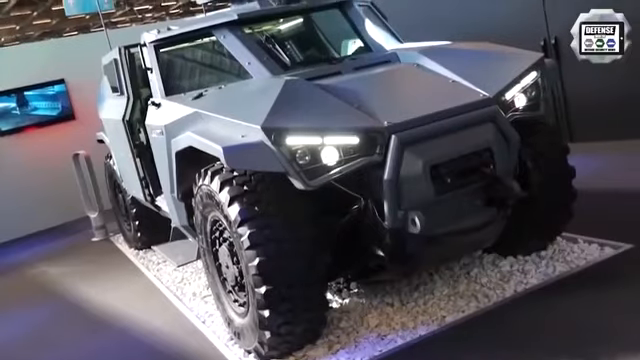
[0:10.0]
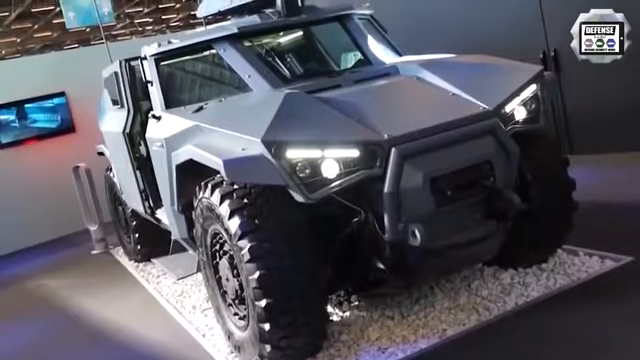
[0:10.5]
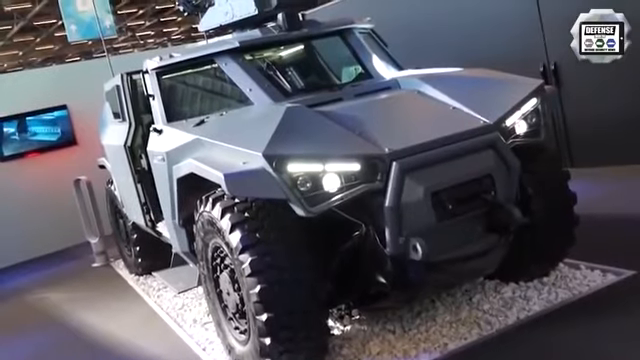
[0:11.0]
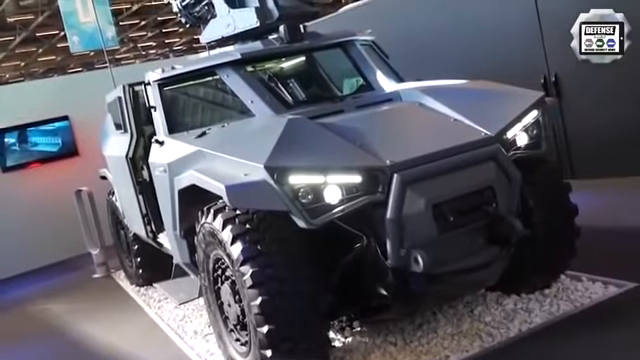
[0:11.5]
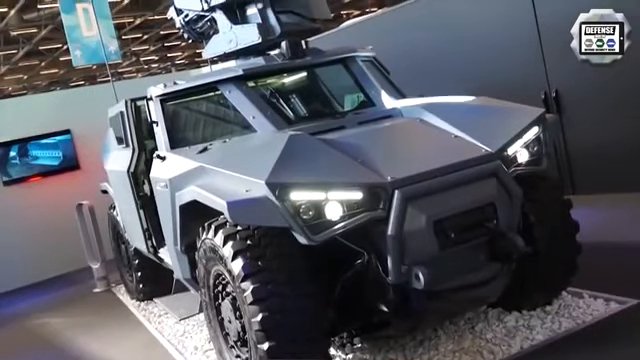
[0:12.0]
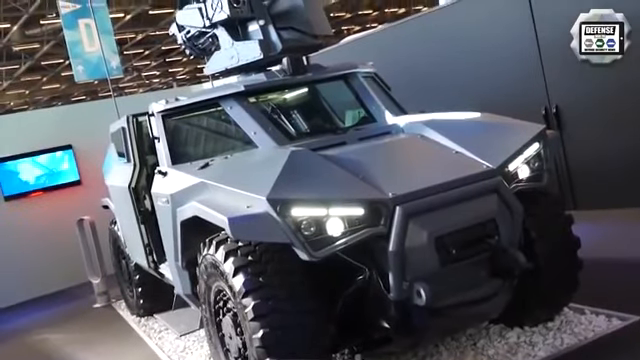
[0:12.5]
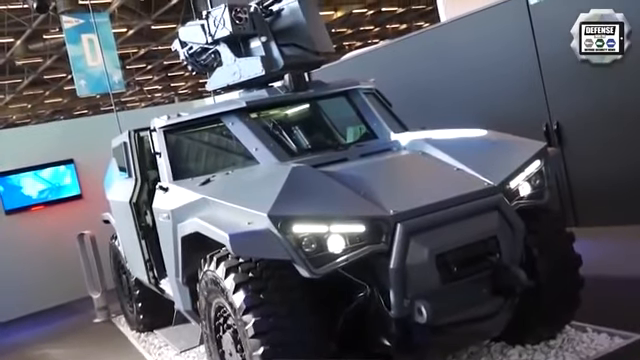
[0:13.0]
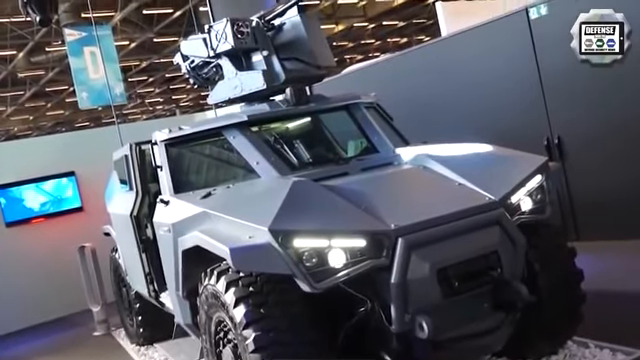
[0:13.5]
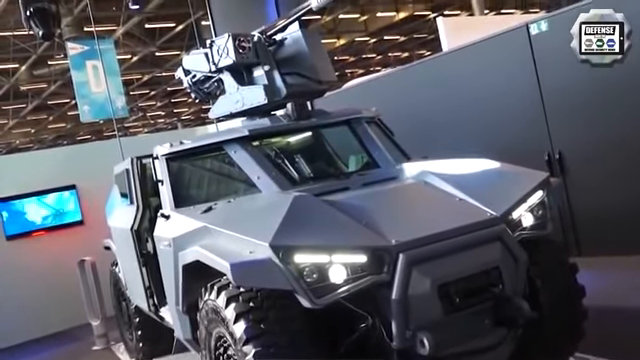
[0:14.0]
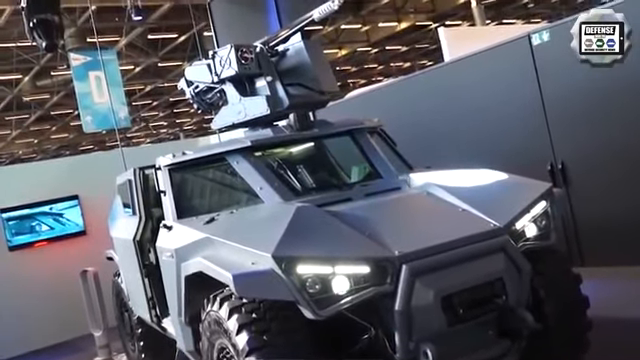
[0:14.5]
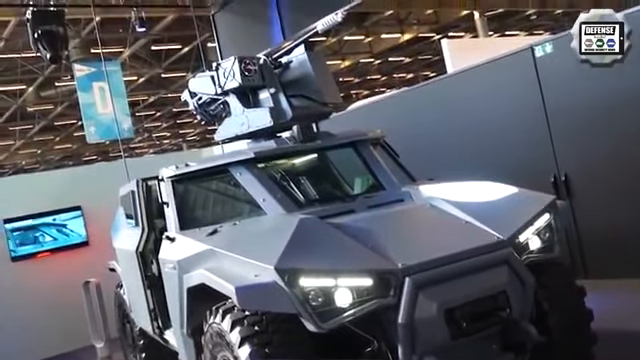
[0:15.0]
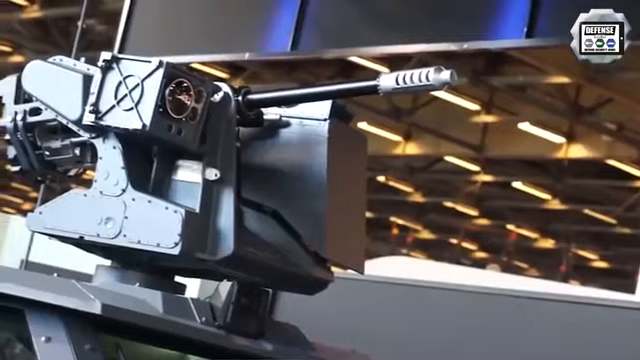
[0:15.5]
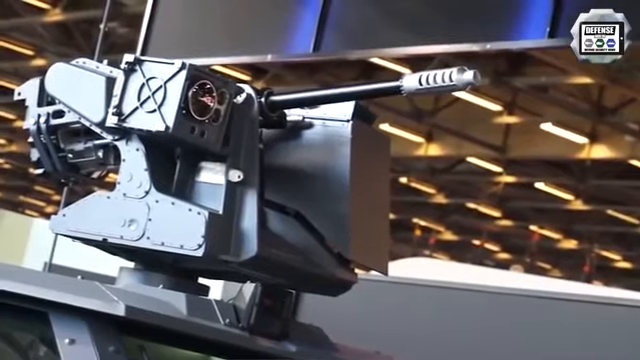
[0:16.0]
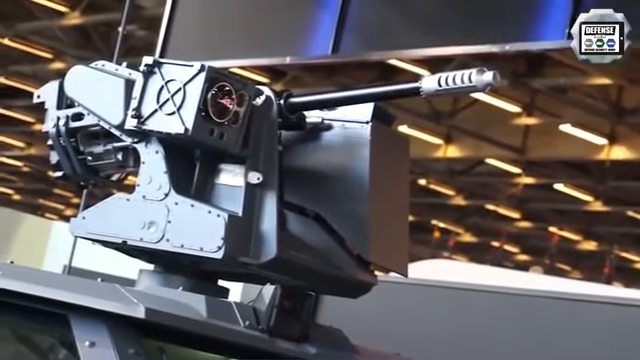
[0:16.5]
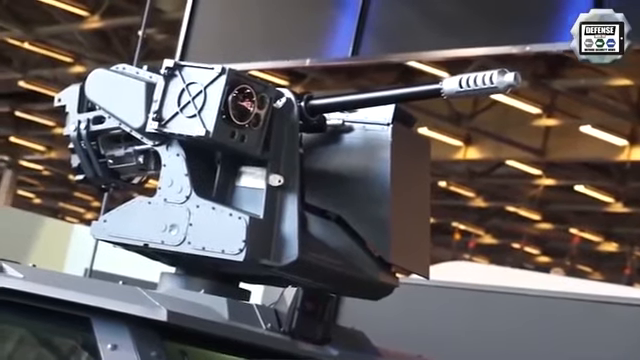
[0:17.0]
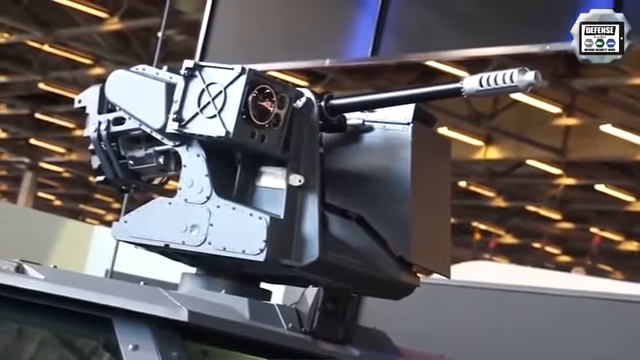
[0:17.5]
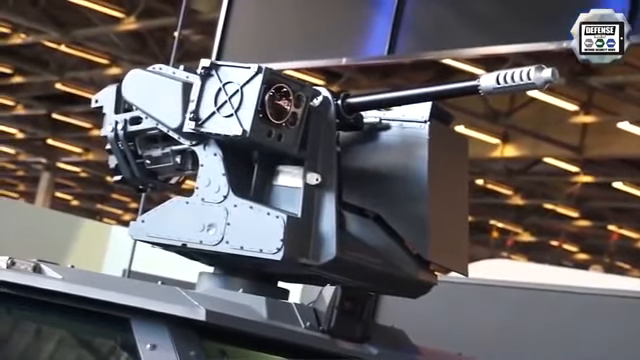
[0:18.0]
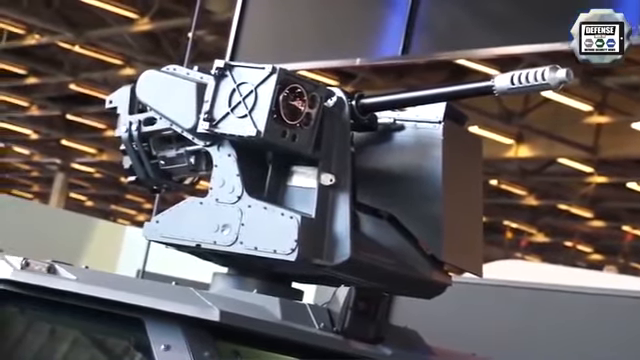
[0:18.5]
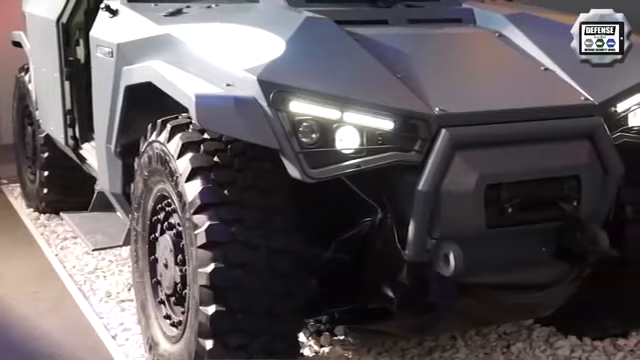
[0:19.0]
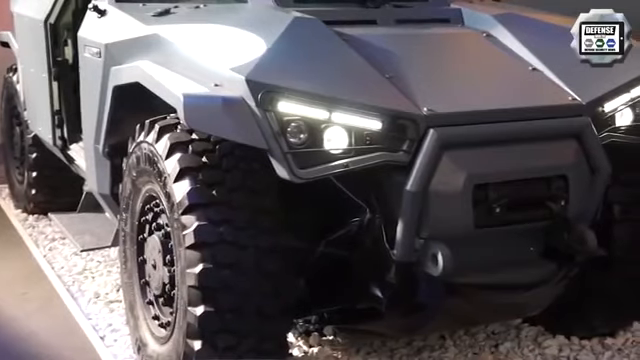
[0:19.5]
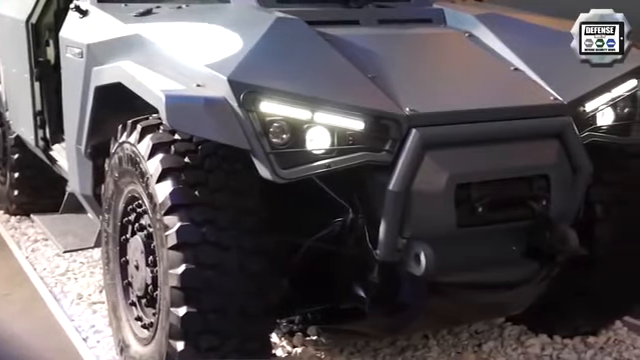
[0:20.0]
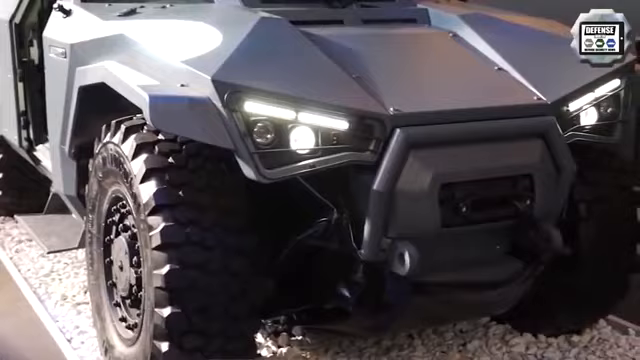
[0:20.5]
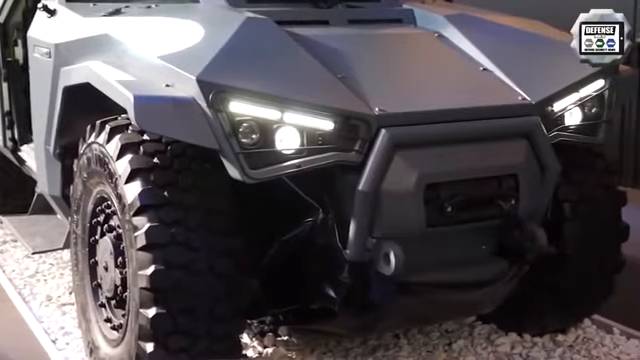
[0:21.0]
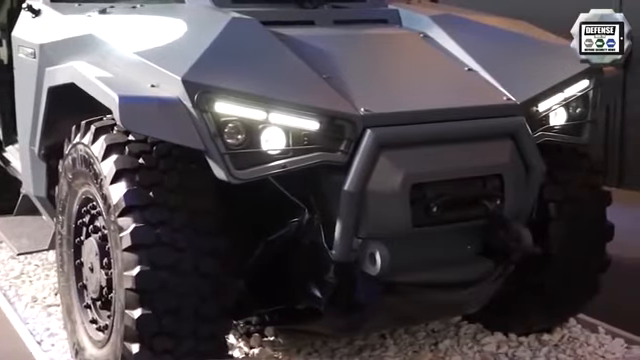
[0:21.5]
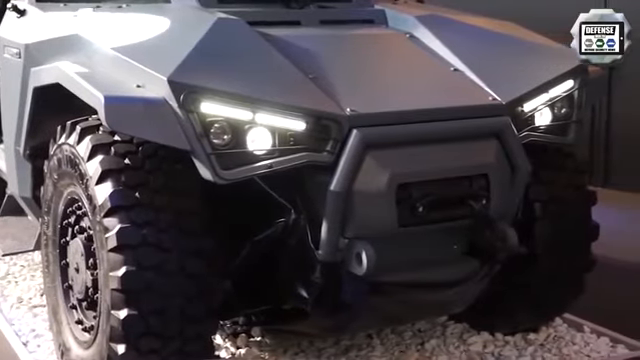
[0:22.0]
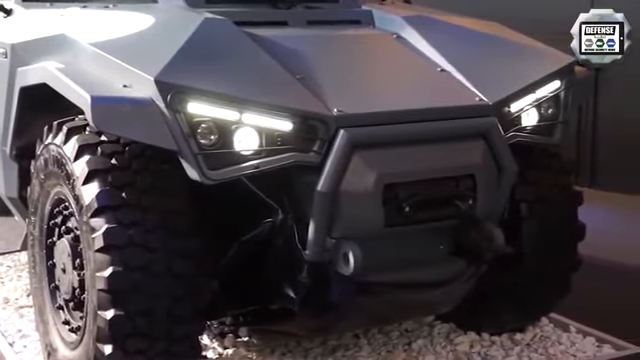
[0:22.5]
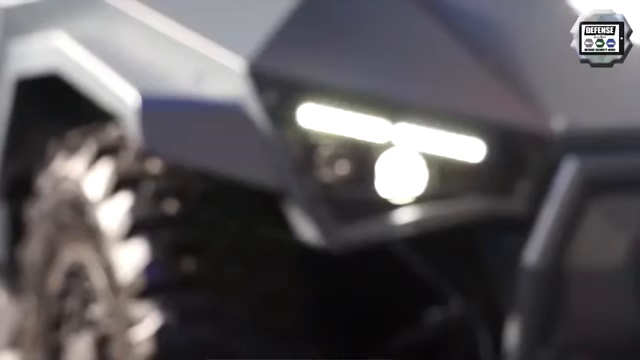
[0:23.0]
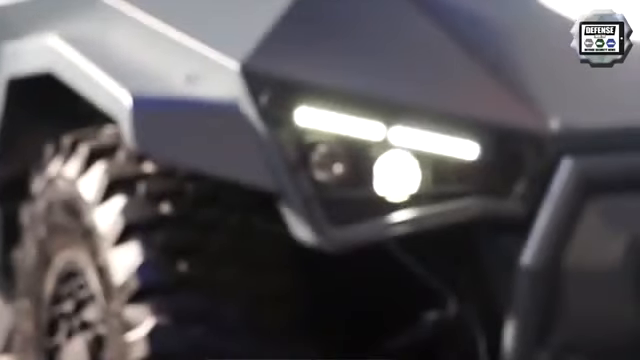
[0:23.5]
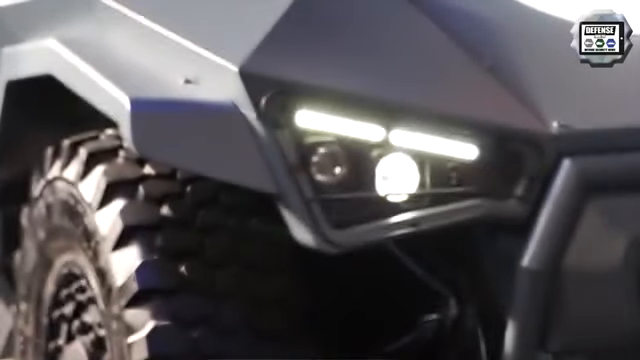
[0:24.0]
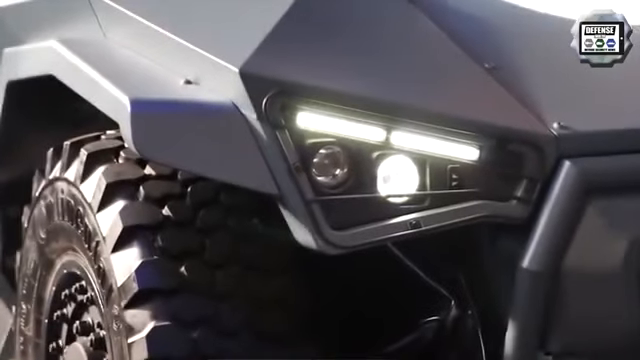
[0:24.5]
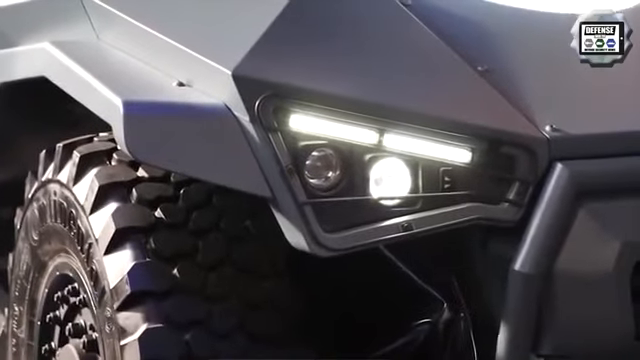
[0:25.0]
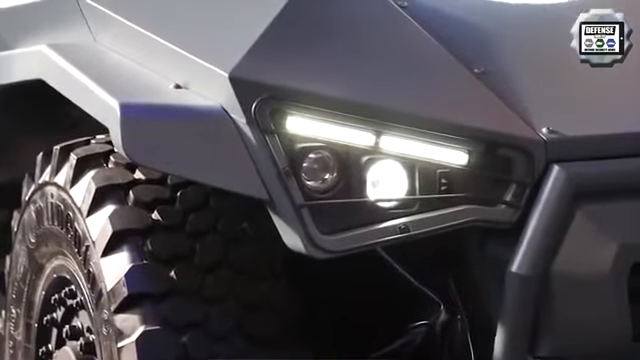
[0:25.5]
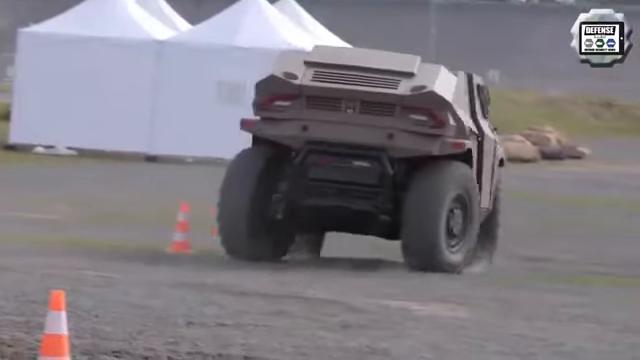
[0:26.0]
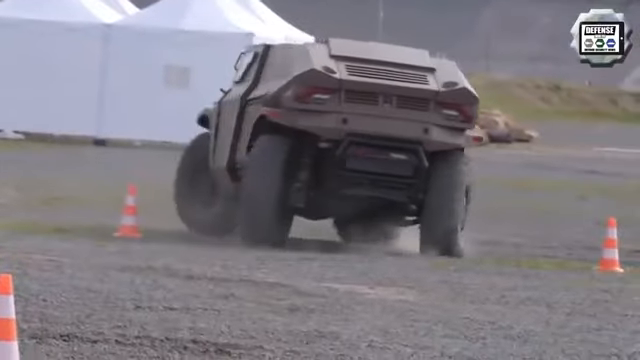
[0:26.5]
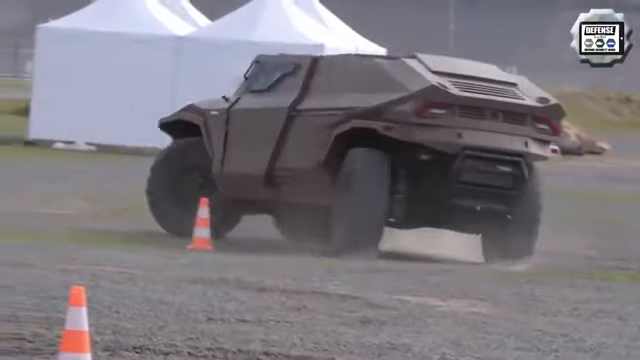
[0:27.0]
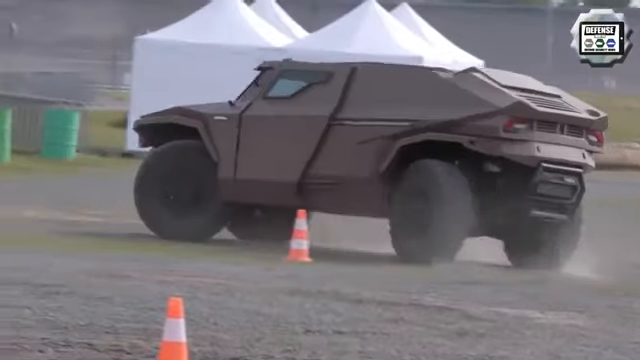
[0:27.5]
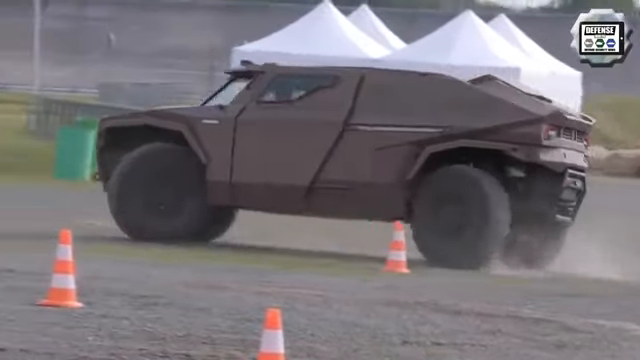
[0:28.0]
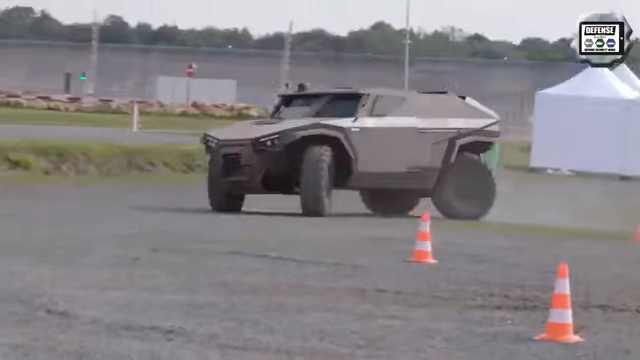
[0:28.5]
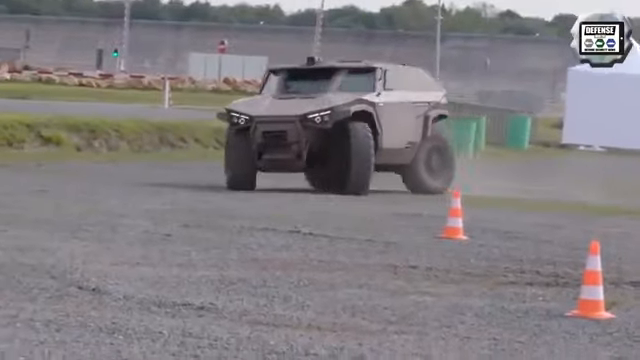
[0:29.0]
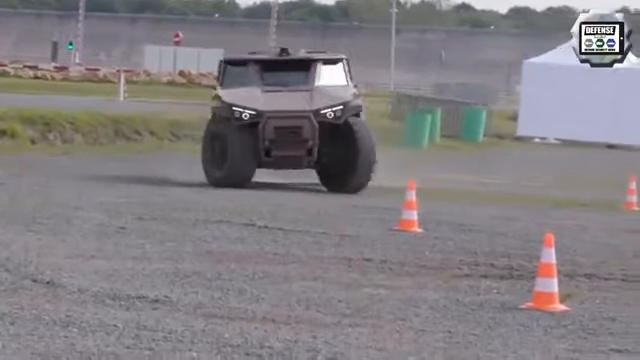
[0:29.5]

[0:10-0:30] A brand-new, very unusual-looking Humvee is in a showroom. A piece of equipment is on its roof: a large handle with light gray on a black rod, attached to something that almost looks like a camera. The tires are huge and black with very deep treads. The Humvee is then outside, going around a track set up with orange and white construction cones, performing very well and making very tight, quick turns. In the showroom, the new Humvee is parked on white gravel, with what looks like a Dyson fan behind the back wheel and a TV screen on the wall behind the vehicle. The new Humvee is dark grey and has its lights on.